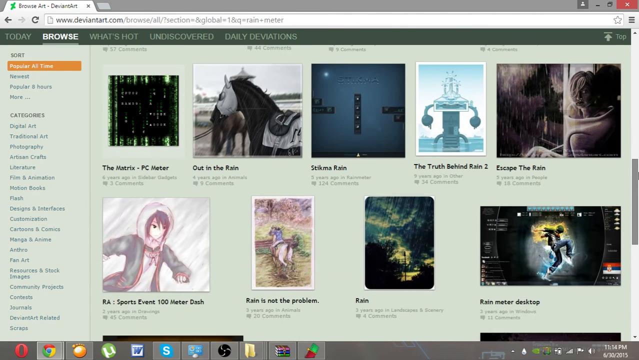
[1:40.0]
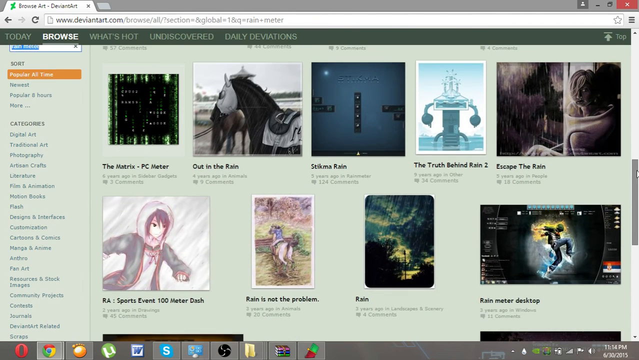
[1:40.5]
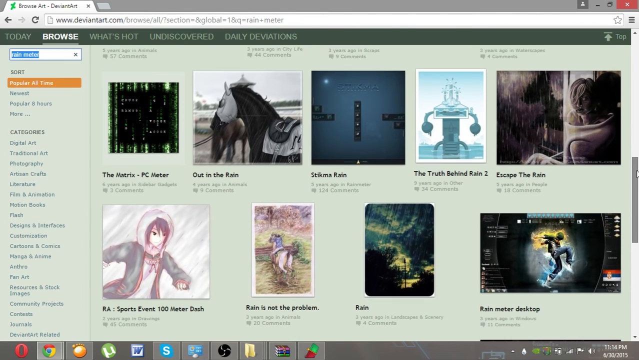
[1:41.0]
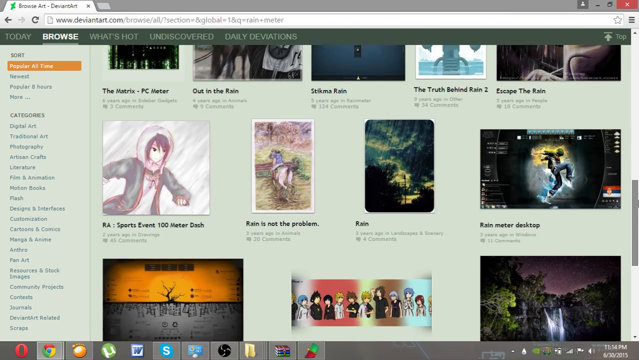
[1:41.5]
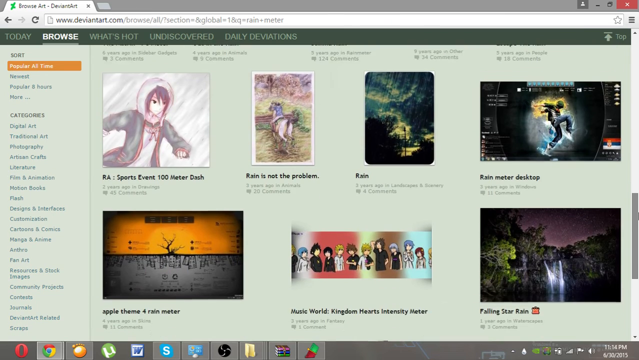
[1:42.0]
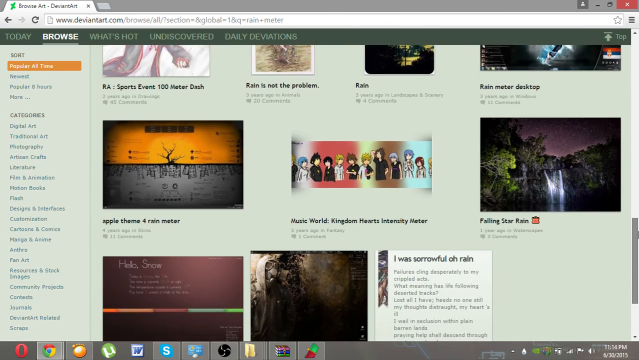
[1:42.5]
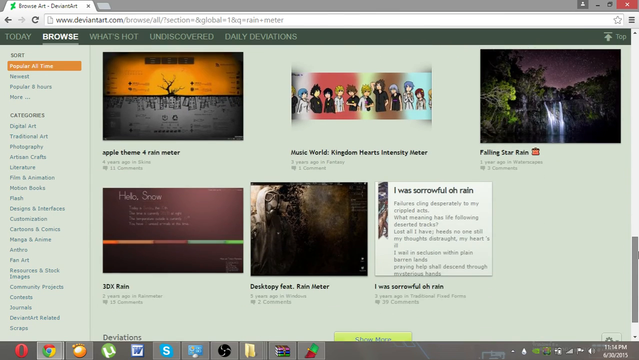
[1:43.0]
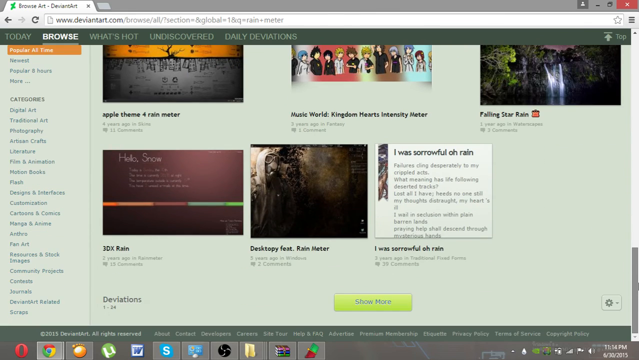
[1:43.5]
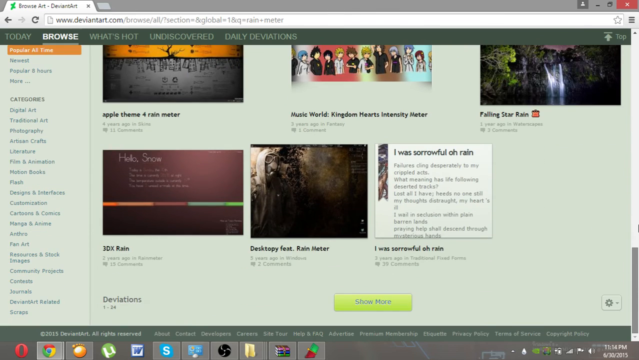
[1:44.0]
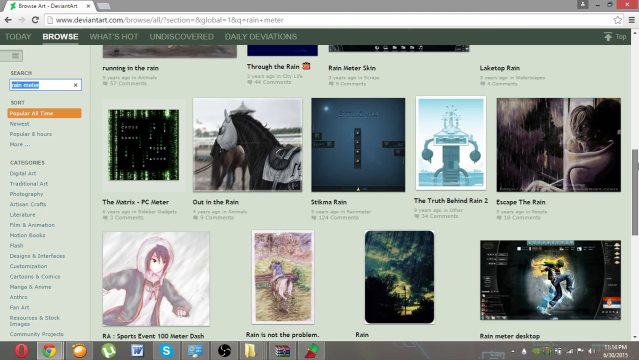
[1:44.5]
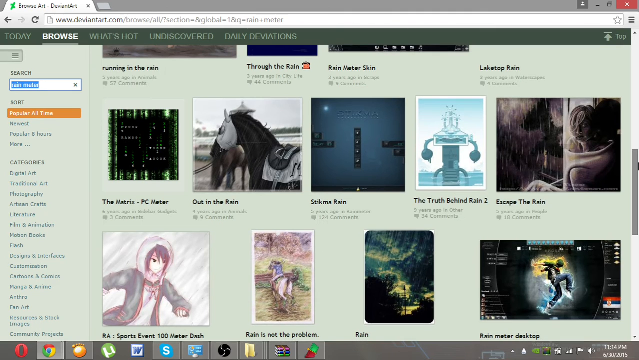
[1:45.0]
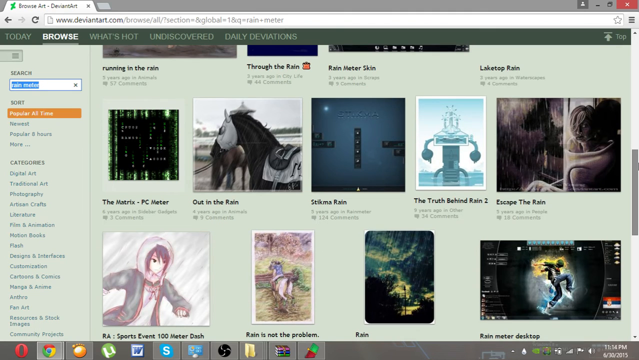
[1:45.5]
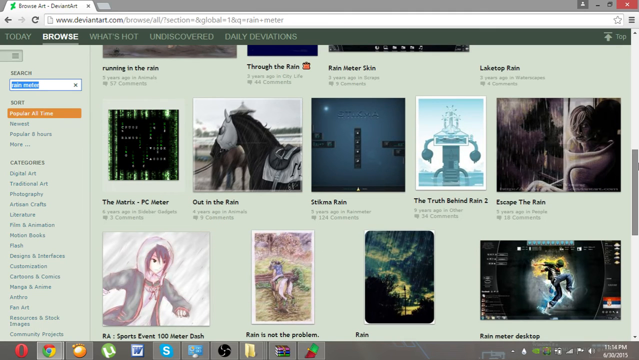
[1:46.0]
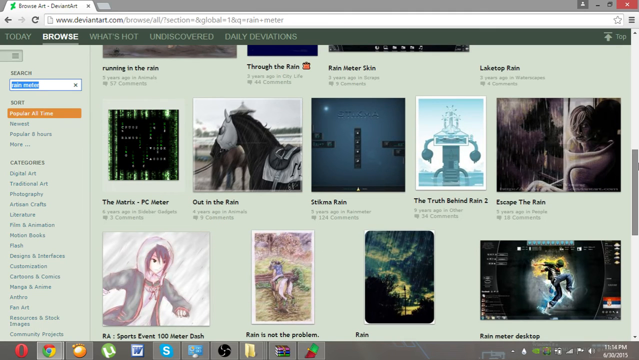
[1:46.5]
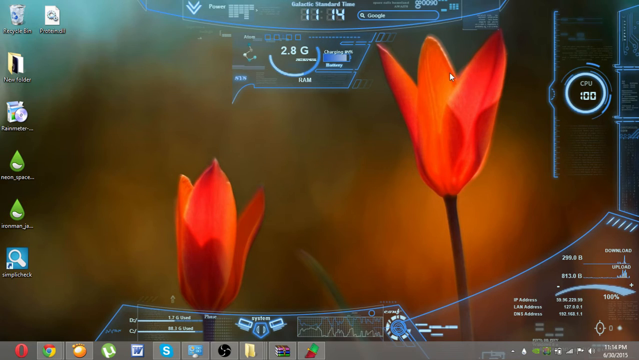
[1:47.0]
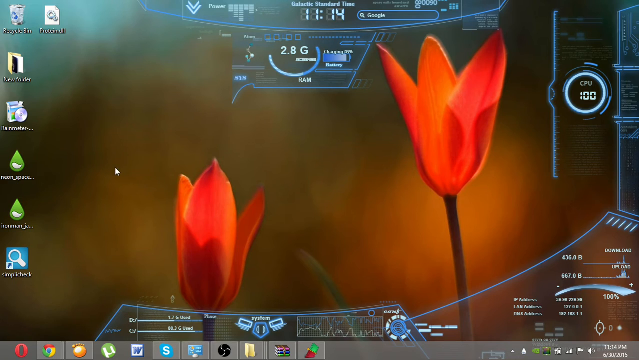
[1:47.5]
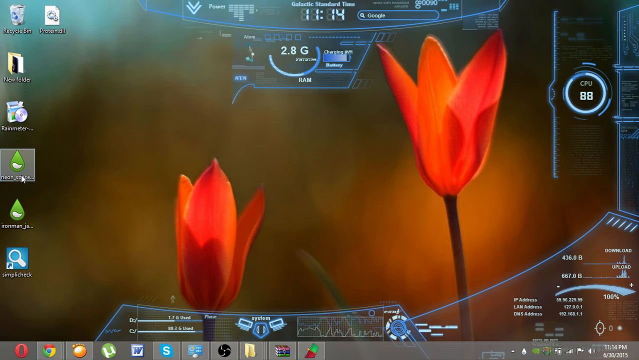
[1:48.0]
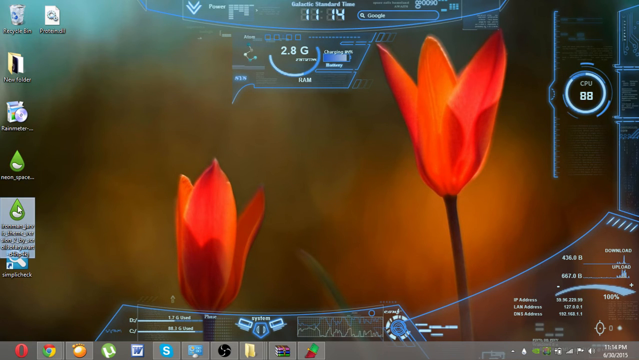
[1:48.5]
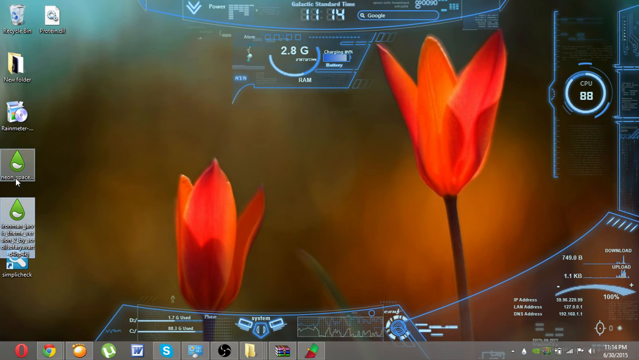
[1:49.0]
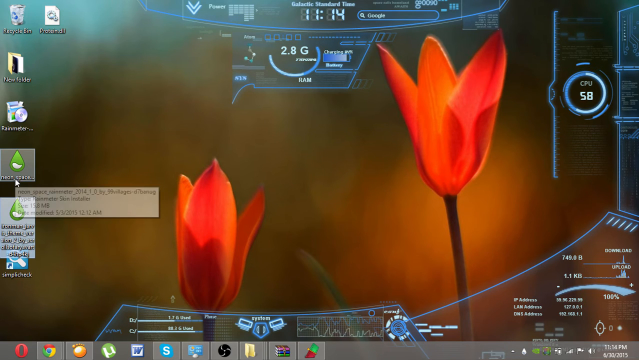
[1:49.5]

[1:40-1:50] A DeviantArt website page is shown with the browse option selected. Various images are visible on the page, including a Japanese-style drawing of a boy running through the rain with a pink tinge to it, an image of a racehorse wearing blinkers and a saddle that appears to be tethered on a racecourse in the rain, an image of Matrix-style green rain falling with green terminal-style letters, an image of a woman standing in a doorway in the rain, and a couple of futuristic images showing mechanical devices. The DeviantArt page has a light green tint, with a dark green menu bar at the top and a navigation pane on the left-hand side of the screen with various categories visible.